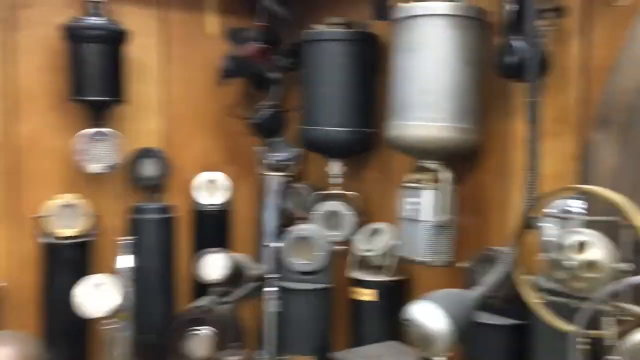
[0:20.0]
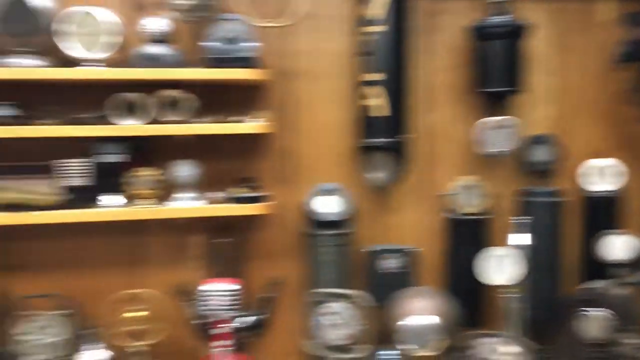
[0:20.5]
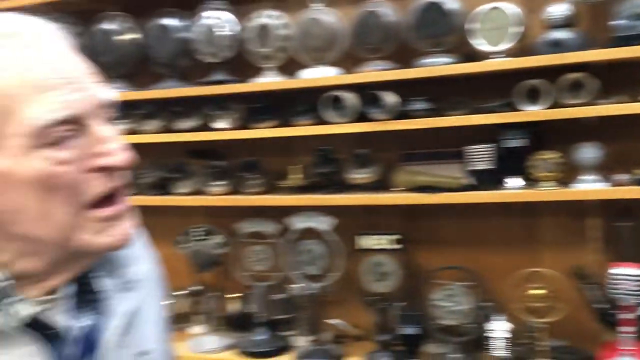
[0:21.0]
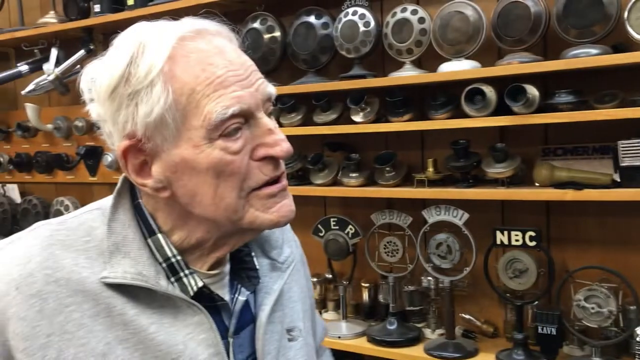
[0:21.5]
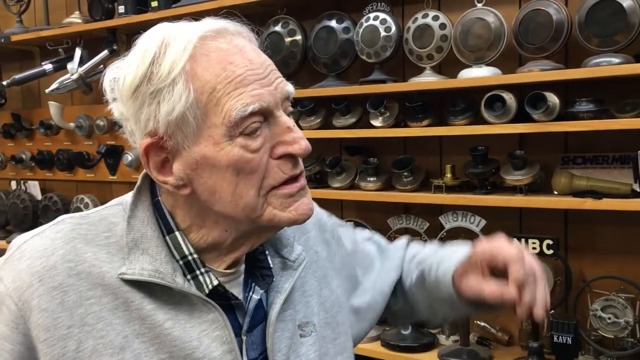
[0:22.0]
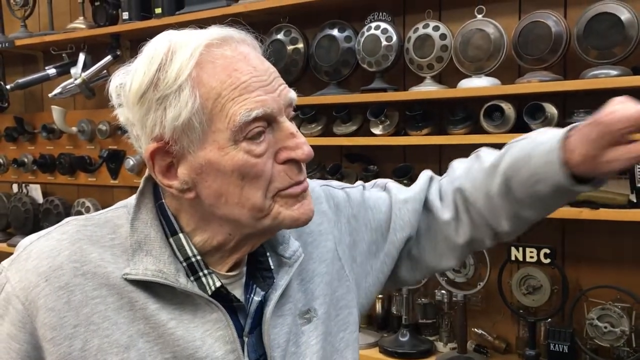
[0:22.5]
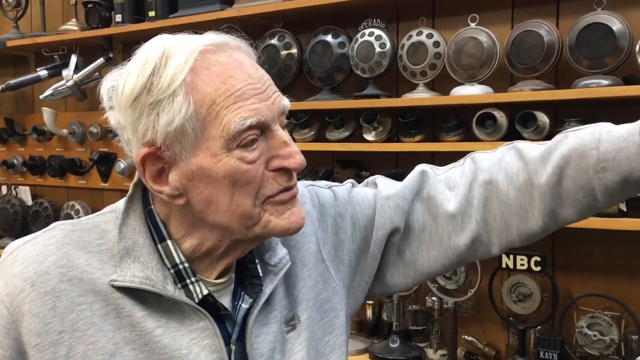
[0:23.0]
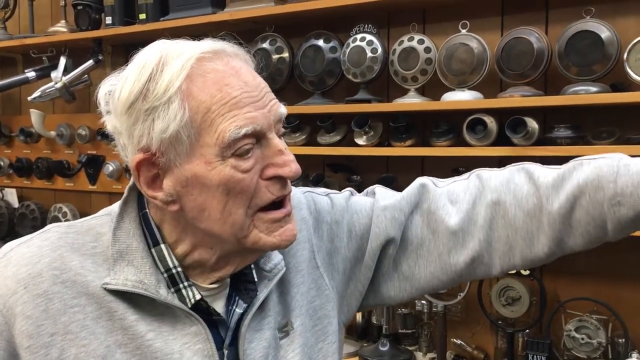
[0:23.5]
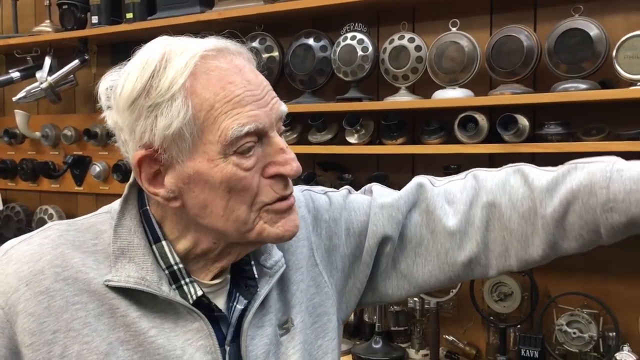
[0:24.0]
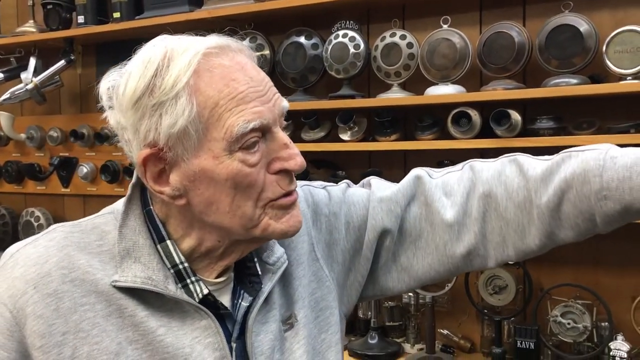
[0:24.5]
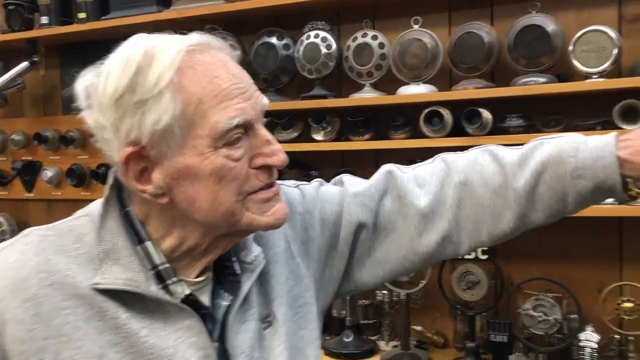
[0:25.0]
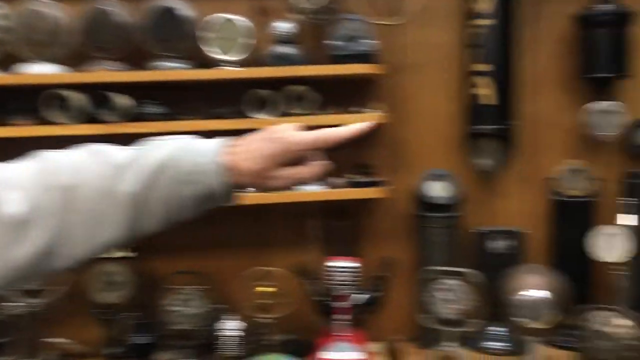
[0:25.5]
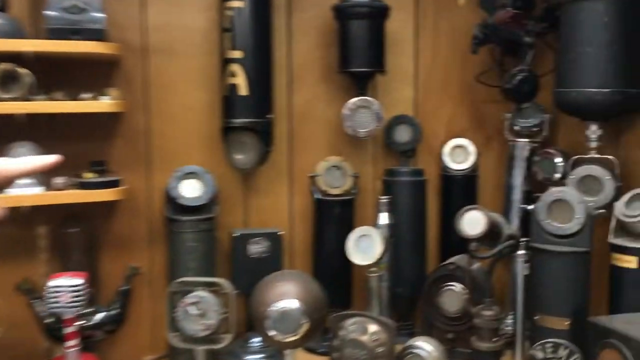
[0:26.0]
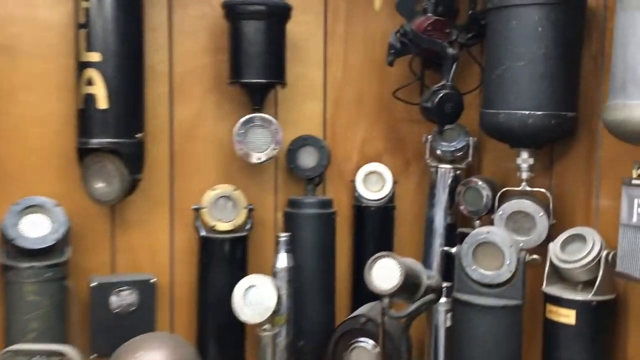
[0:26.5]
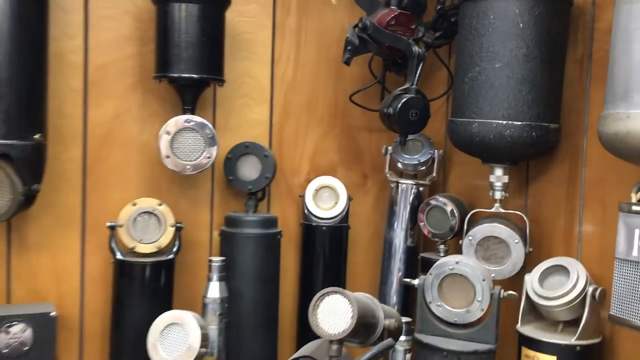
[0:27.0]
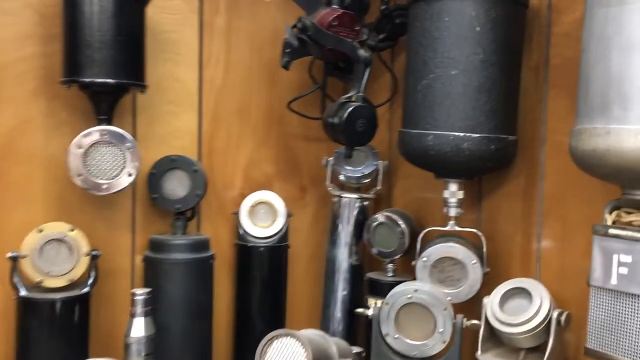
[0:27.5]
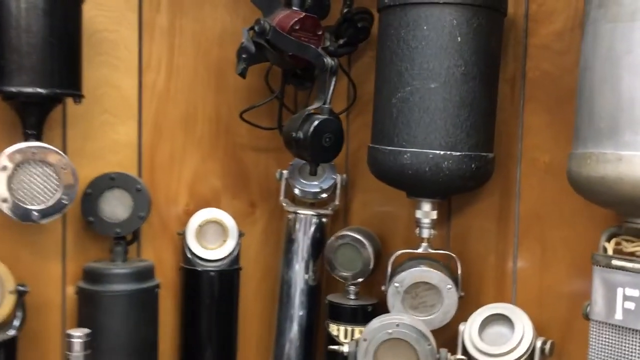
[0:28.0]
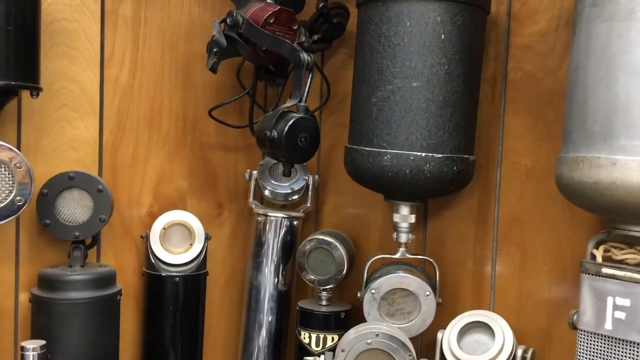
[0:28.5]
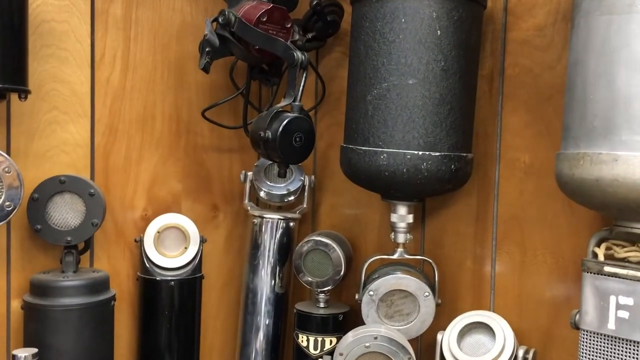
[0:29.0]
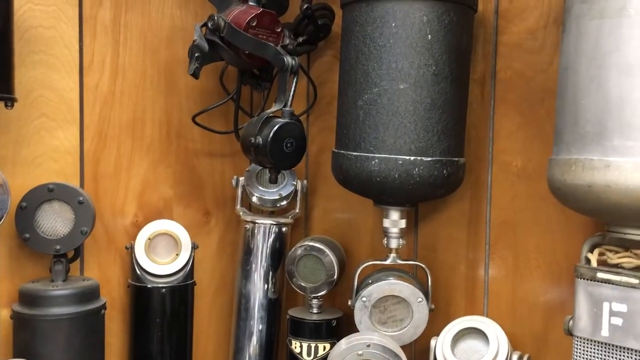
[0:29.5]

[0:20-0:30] In the background are lots of canisters being filmed. Off to the left, an older gentleman points to some of the contraptions hanging on the wall to the left. The picture gets a little blurry, but the items are different colors: some black, some gray, some beige, and some with a bit of gold and shine to them. Under the man's arm is one marked "NBC", like the television channel. The walls in the background look like wood paneling in a light brownish beige color.